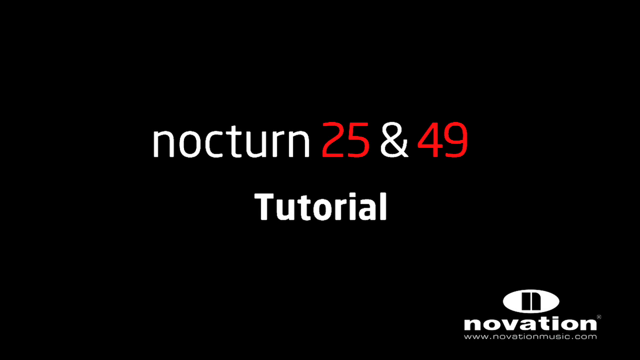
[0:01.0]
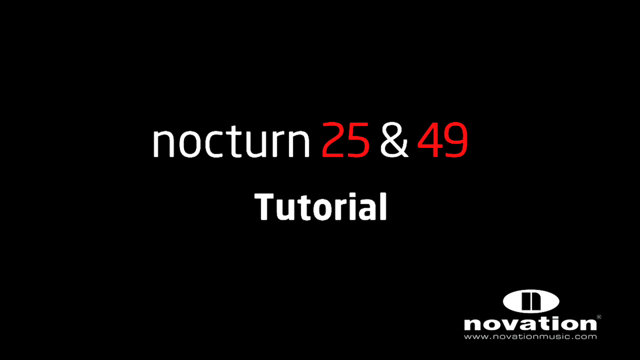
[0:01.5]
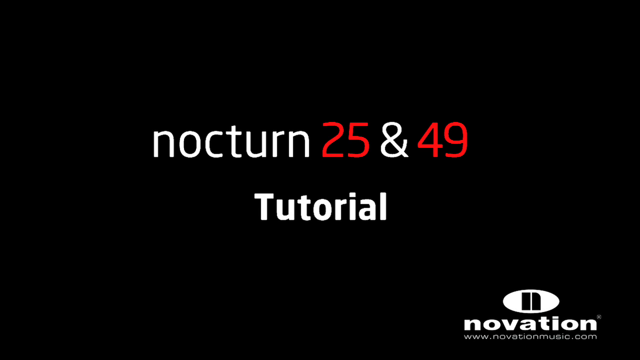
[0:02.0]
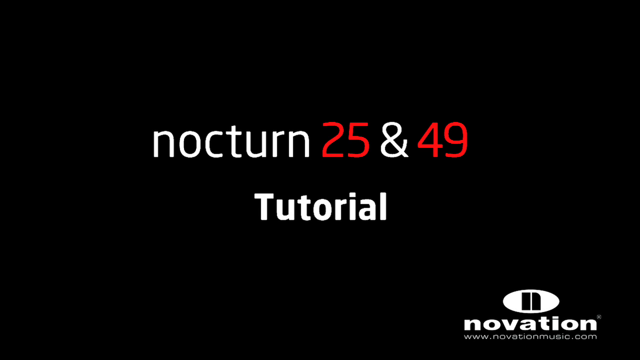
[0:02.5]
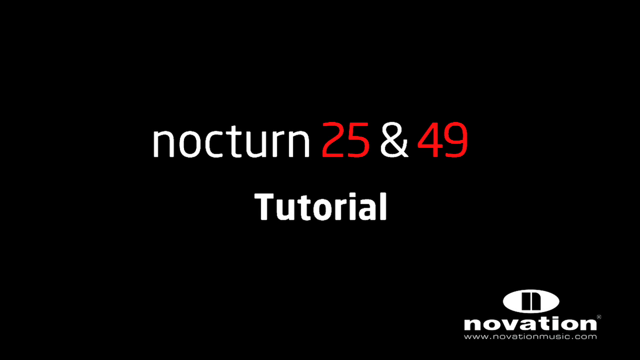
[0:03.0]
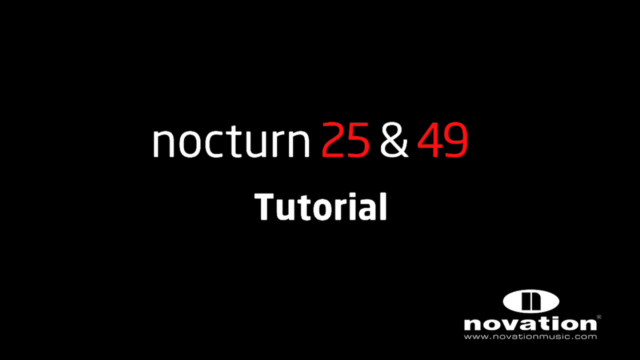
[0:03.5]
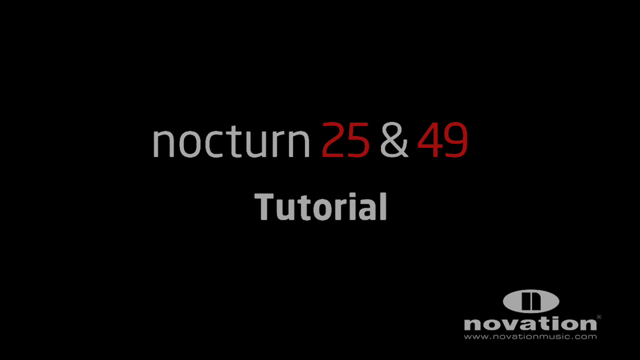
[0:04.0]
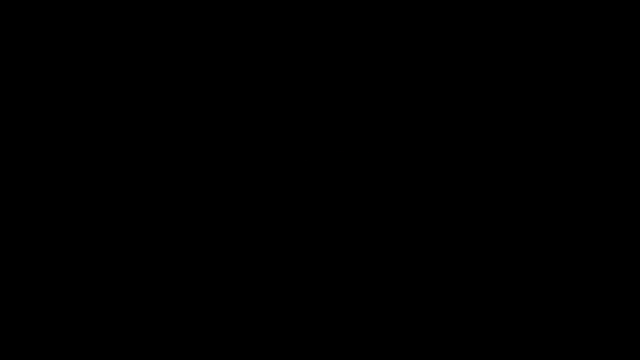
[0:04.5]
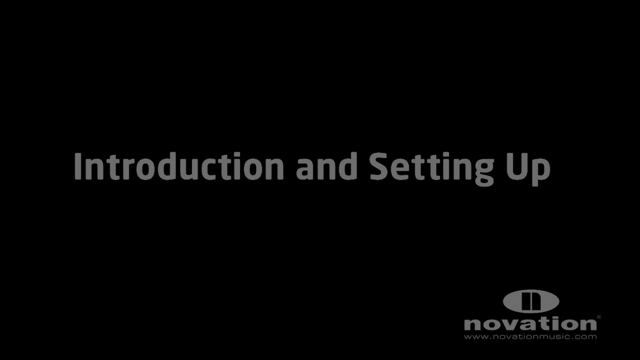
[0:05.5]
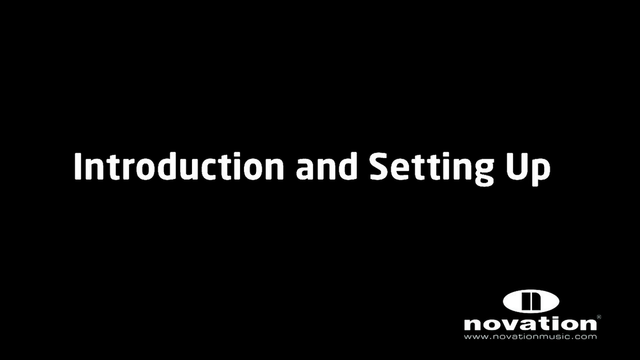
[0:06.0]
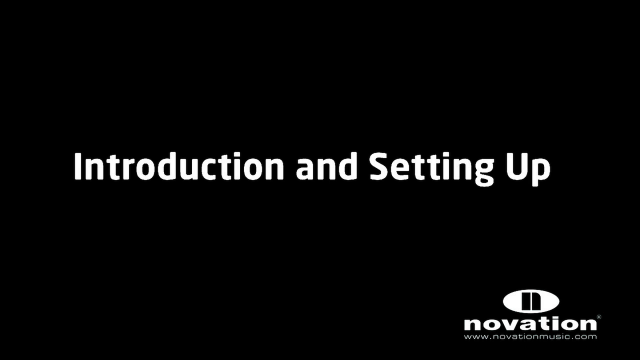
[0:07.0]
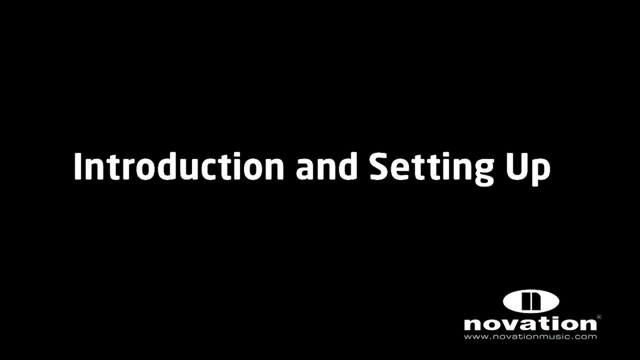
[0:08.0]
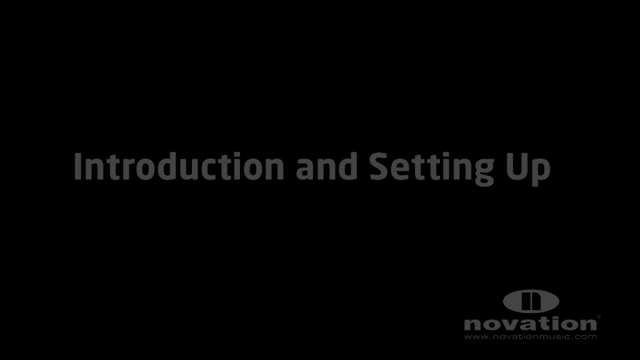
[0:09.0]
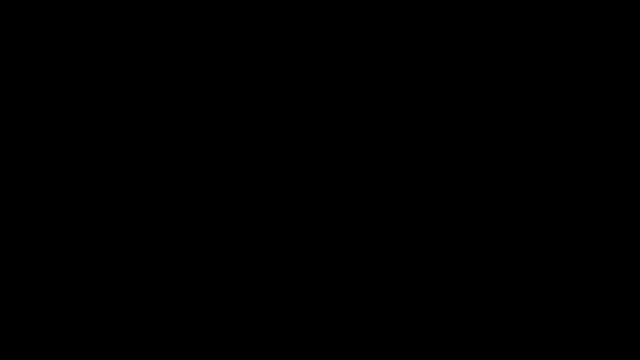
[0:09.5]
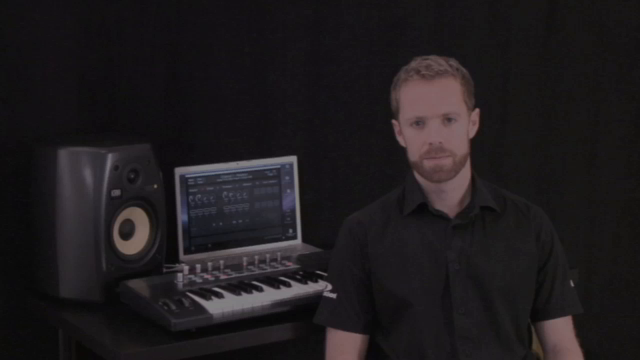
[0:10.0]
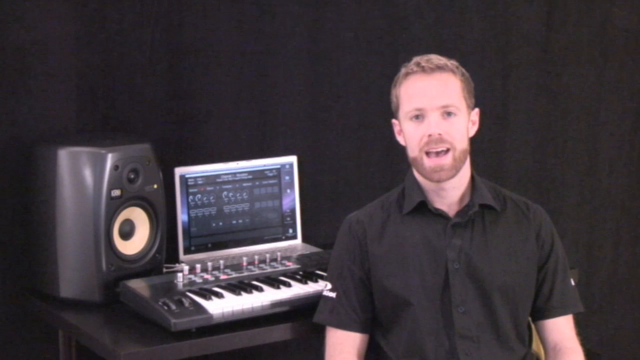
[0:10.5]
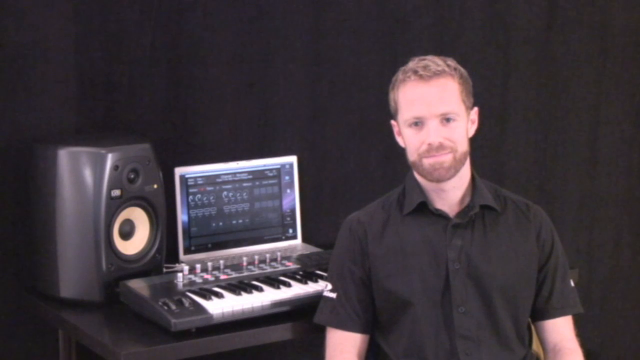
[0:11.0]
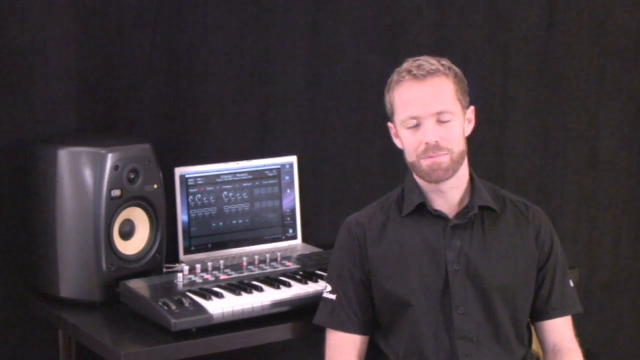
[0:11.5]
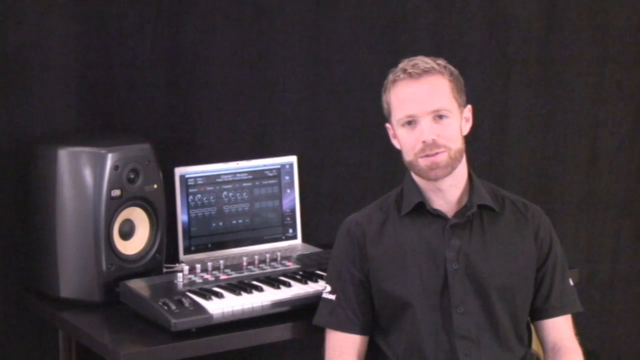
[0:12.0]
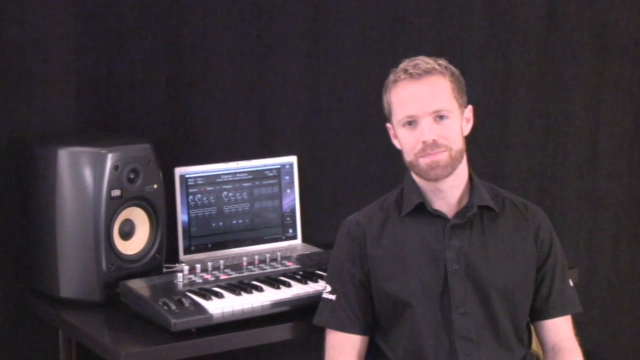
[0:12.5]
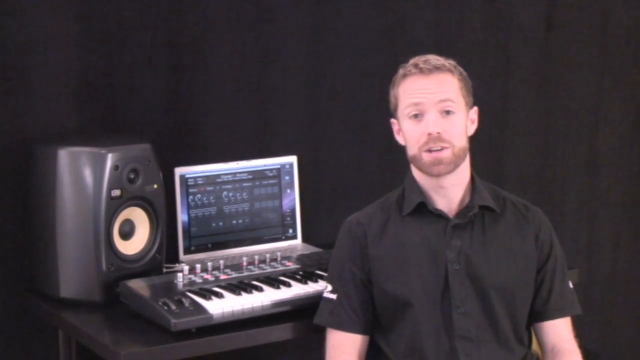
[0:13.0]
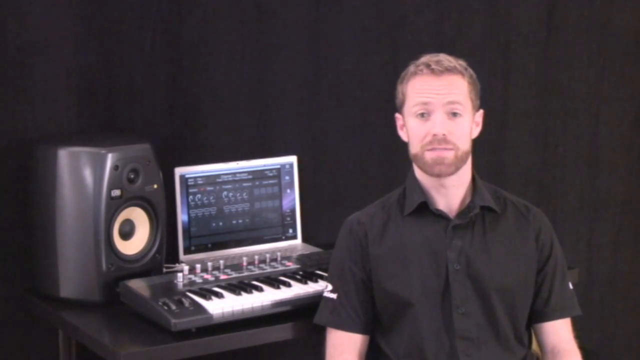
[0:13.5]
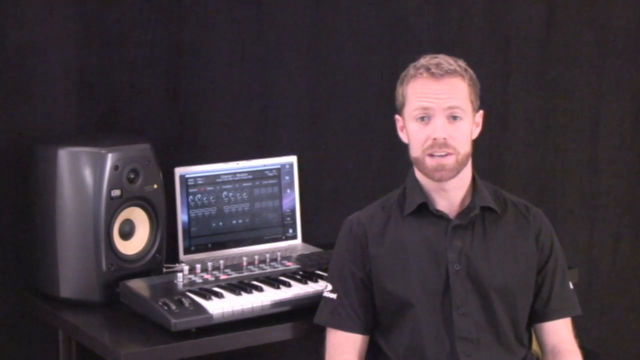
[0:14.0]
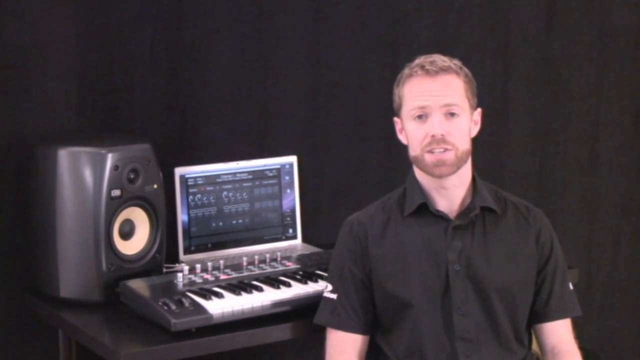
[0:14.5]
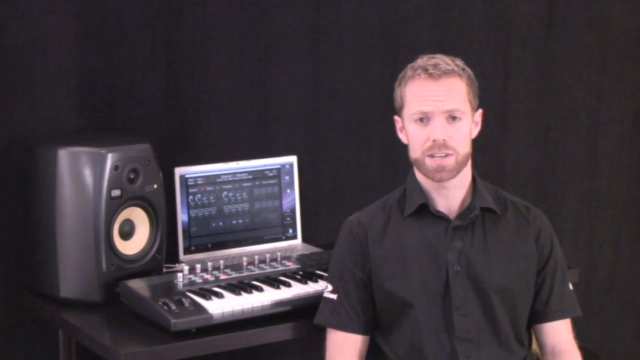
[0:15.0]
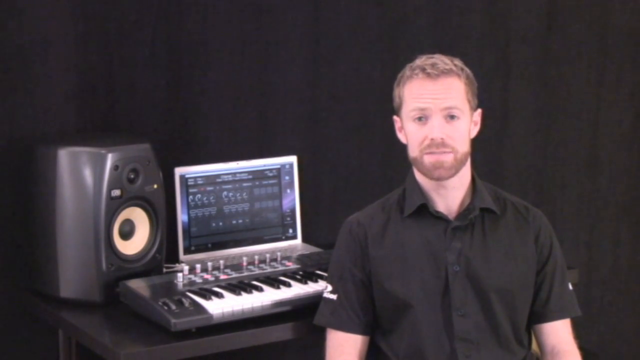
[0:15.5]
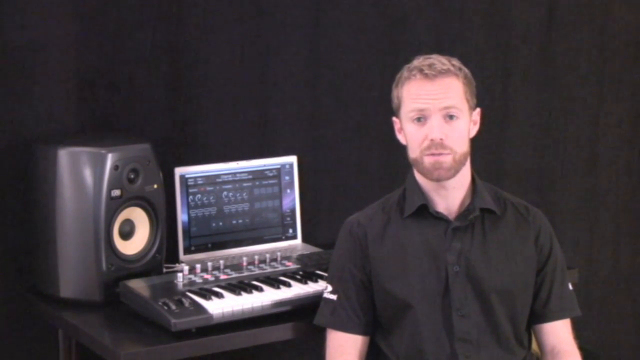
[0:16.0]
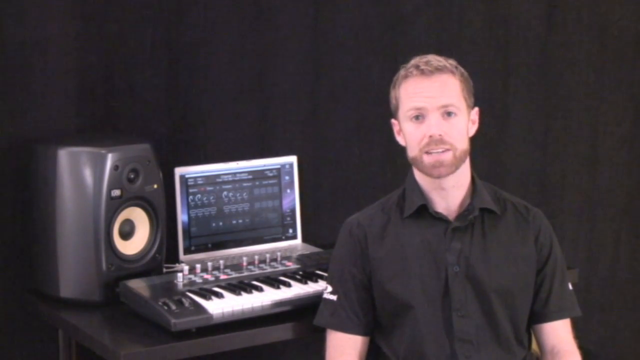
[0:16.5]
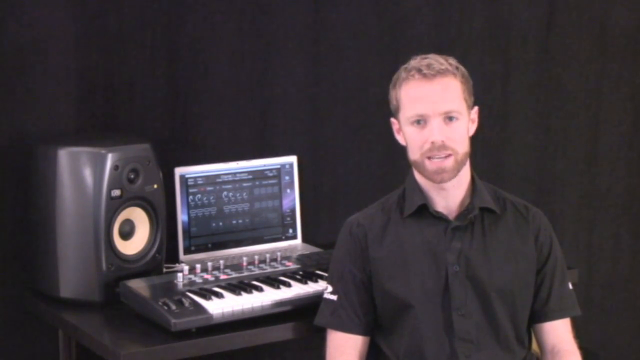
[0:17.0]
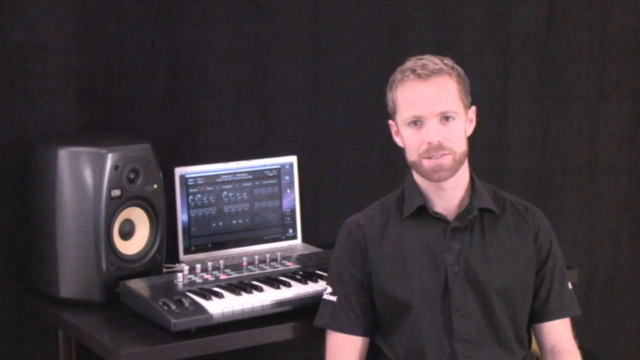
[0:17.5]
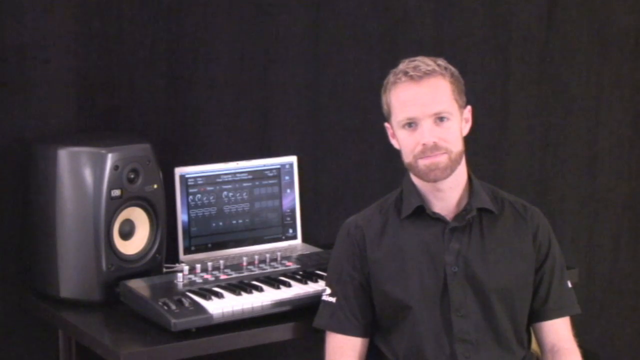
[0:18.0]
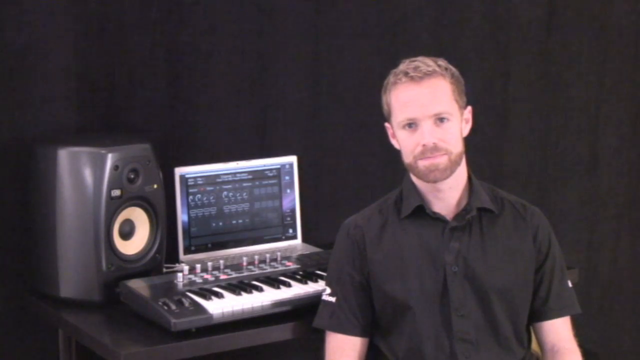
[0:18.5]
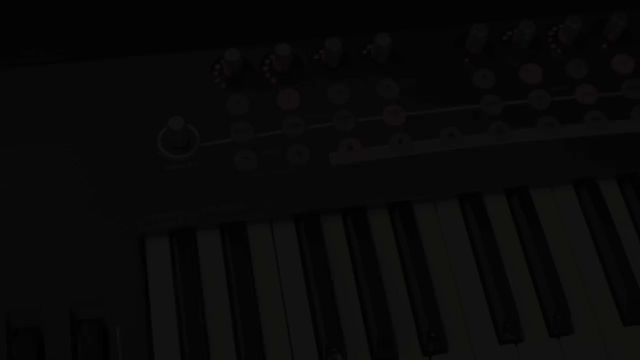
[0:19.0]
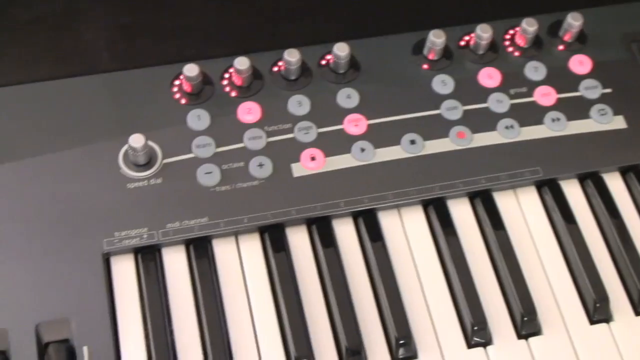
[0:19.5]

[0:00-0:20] The video opens on a black background, then the text "Nocturne 25 and 49 tutorial" appears, with "25" and "49" in red and the rest of the writing in white. In the bottom right corner is "Novation", with the web address "NovationMusic.com" underneath it. That text is then replaced by other white text reading "introduction and setting up". This disappears, and a man wearing a black sleeveless shirt, with a neatly trimmed beard, is seated on the right beside a keyboard on the left. Just beyond the keyboard there seems to be a laptop displaying some kind of music program, and there is also a speaker. The man speaks to the camera, and the background is a black curtain.